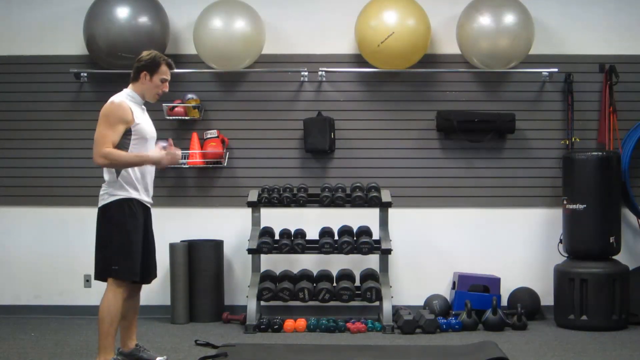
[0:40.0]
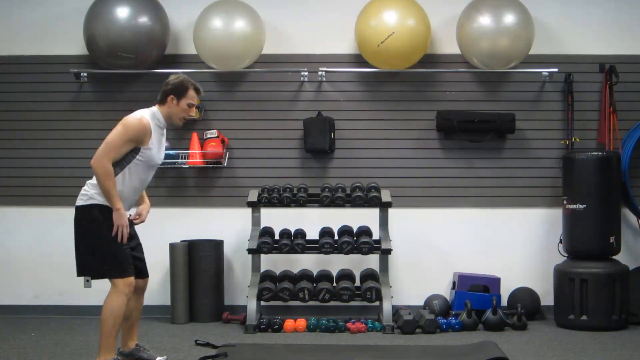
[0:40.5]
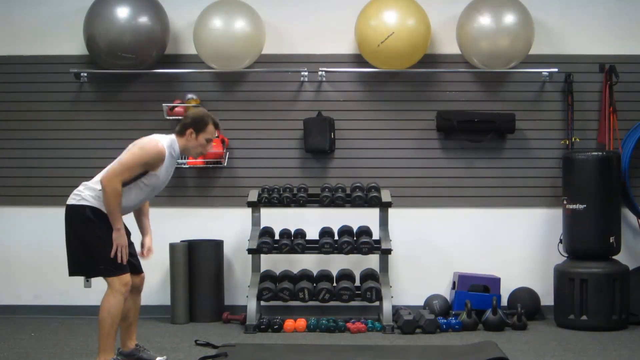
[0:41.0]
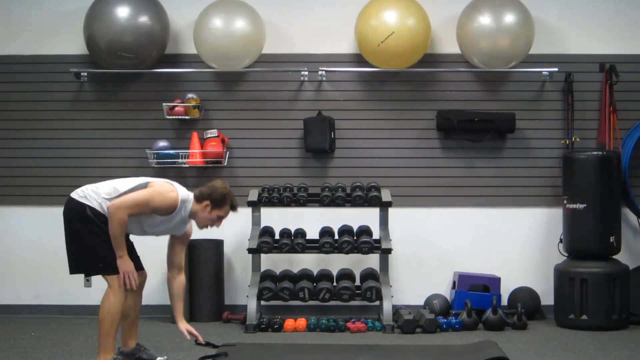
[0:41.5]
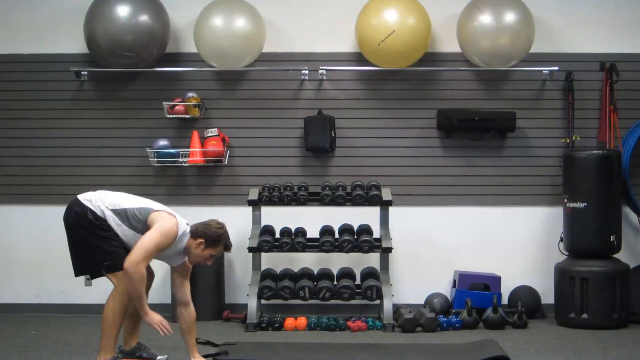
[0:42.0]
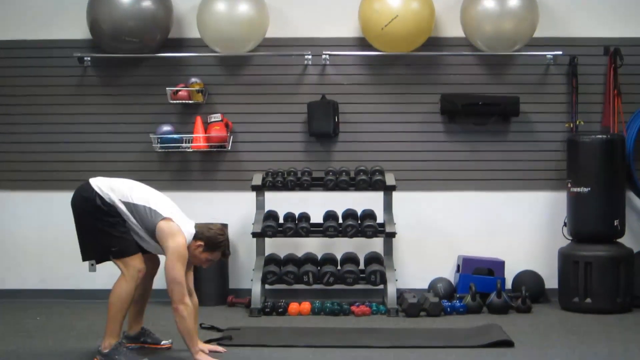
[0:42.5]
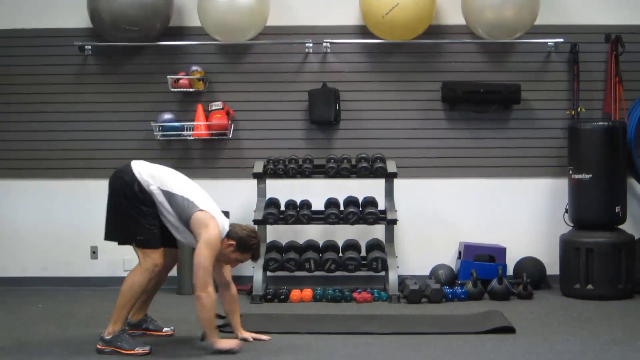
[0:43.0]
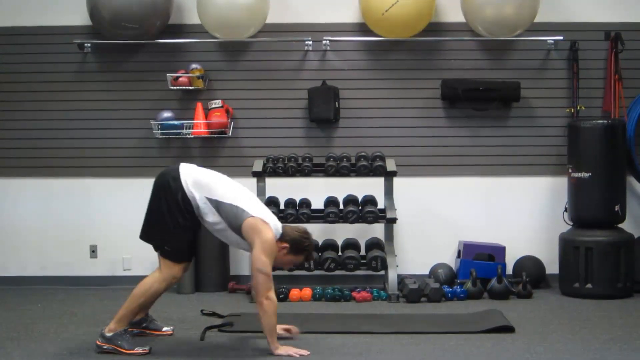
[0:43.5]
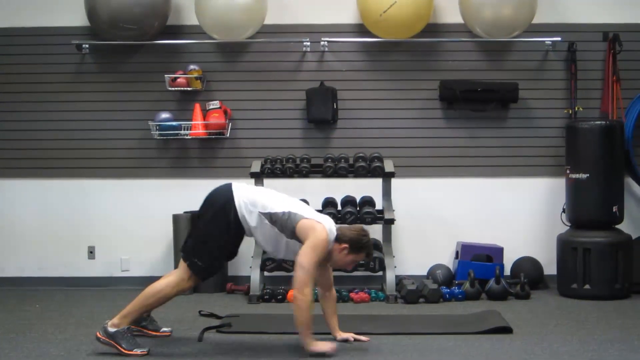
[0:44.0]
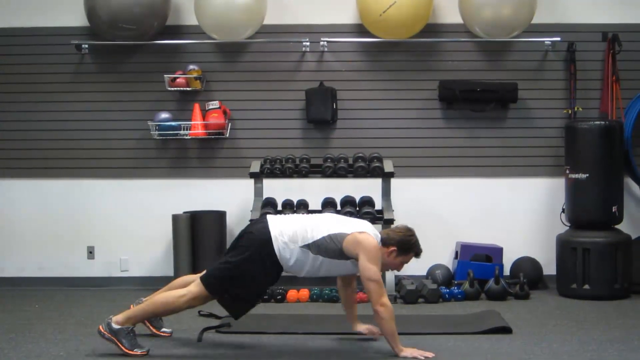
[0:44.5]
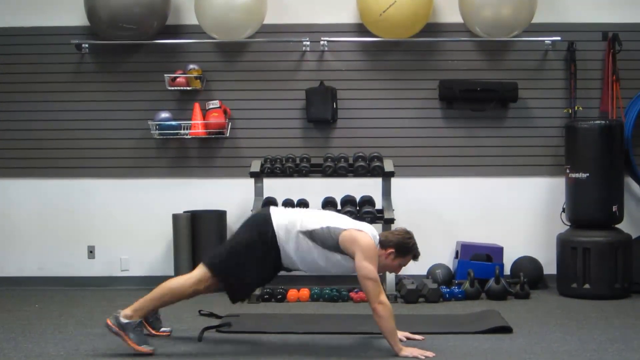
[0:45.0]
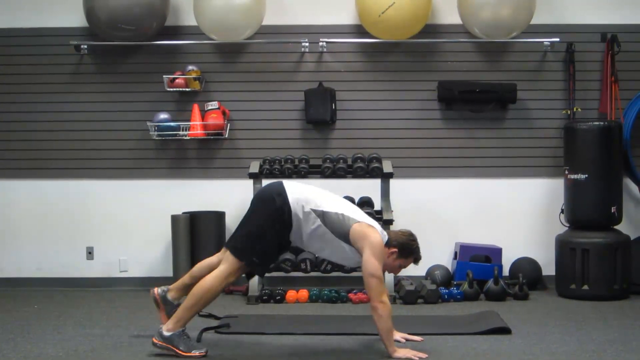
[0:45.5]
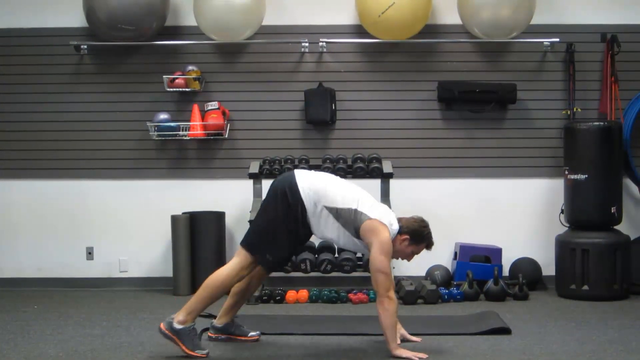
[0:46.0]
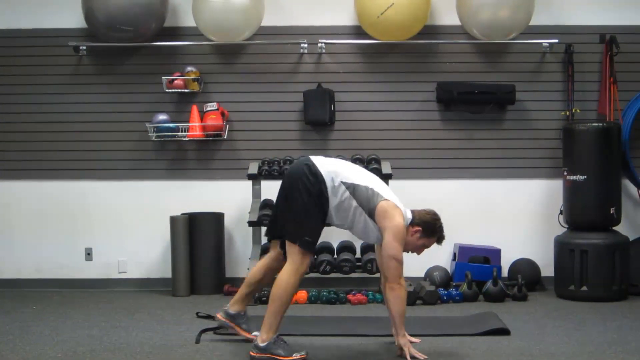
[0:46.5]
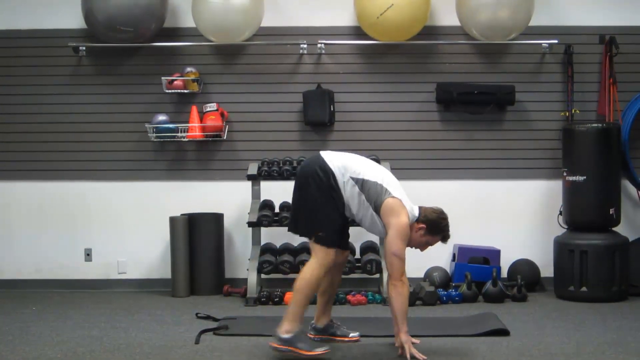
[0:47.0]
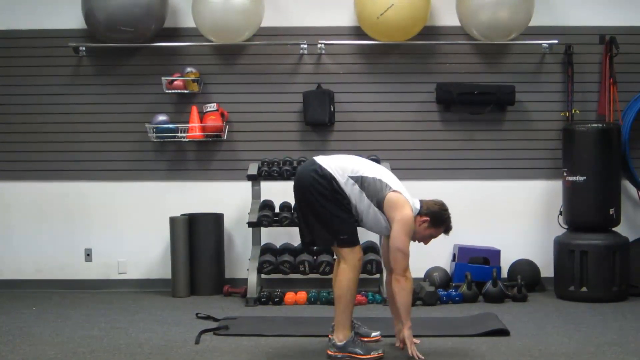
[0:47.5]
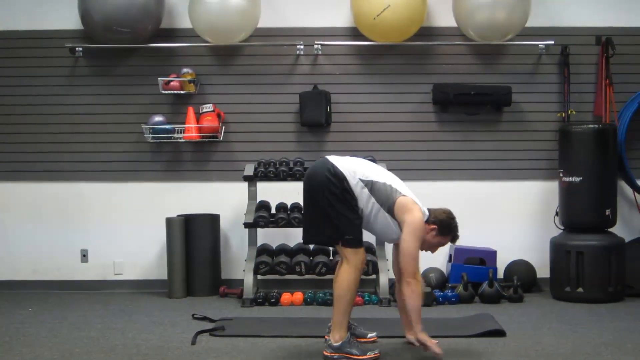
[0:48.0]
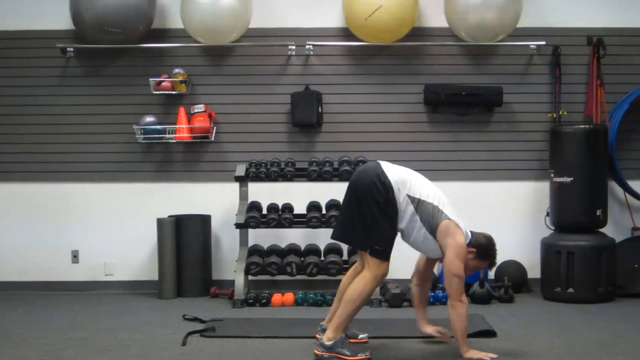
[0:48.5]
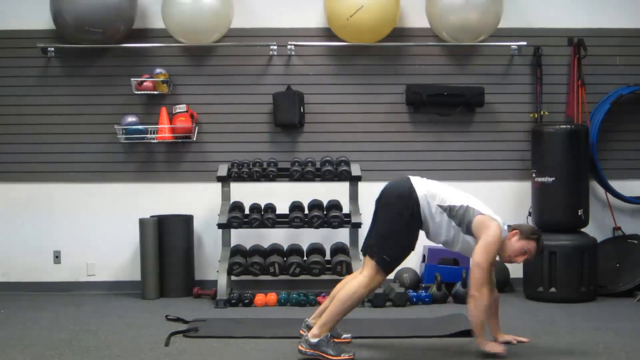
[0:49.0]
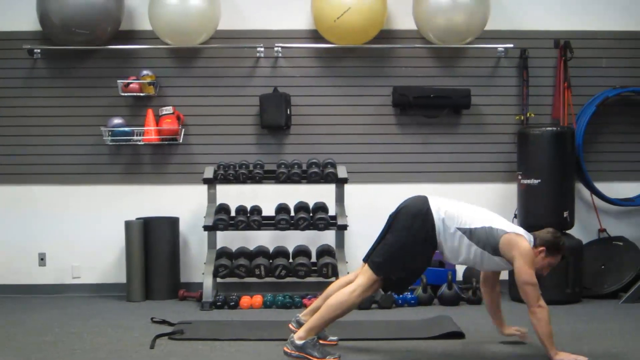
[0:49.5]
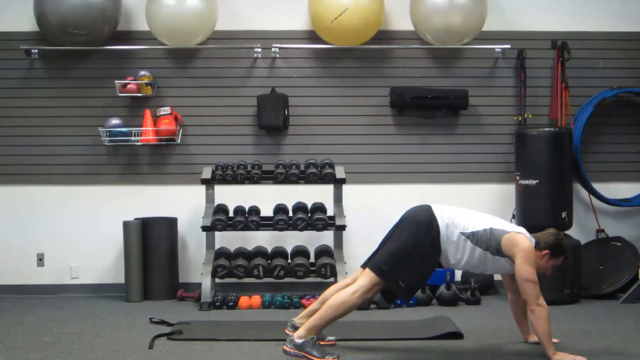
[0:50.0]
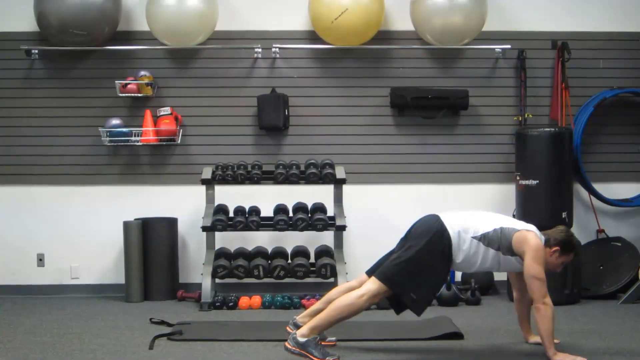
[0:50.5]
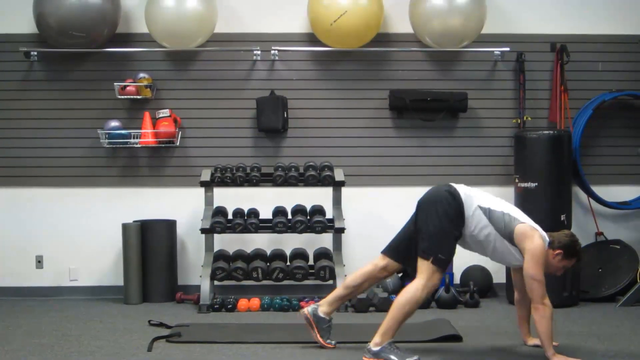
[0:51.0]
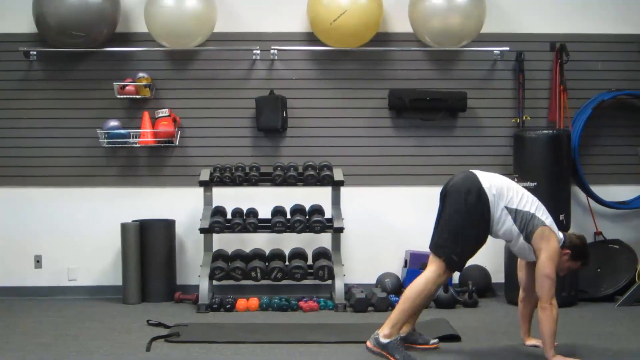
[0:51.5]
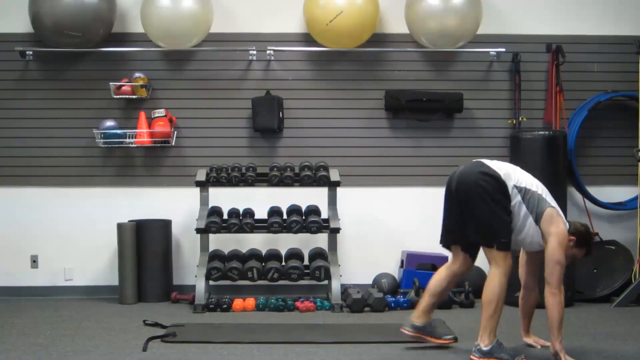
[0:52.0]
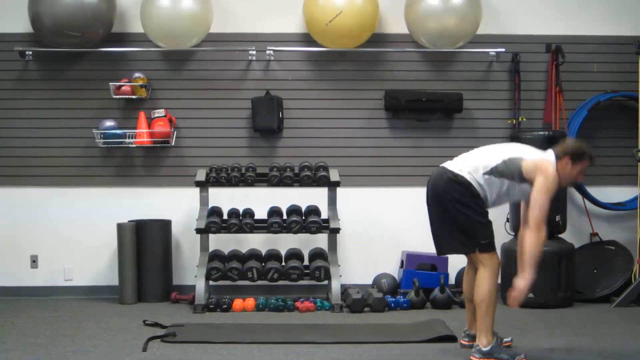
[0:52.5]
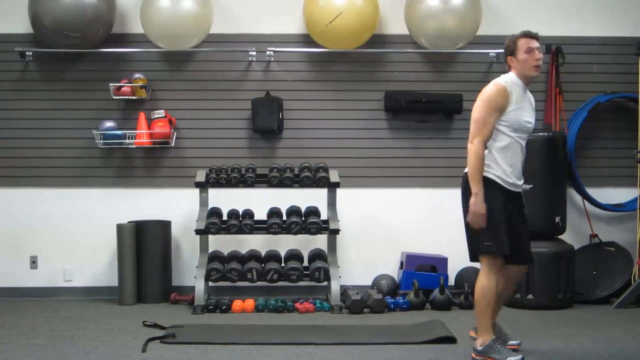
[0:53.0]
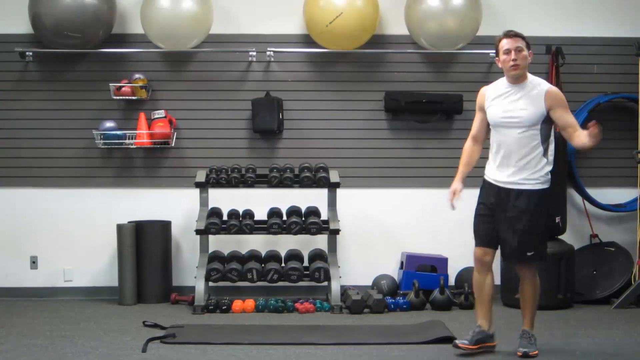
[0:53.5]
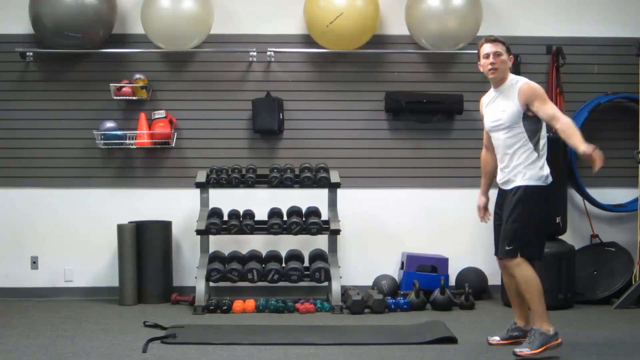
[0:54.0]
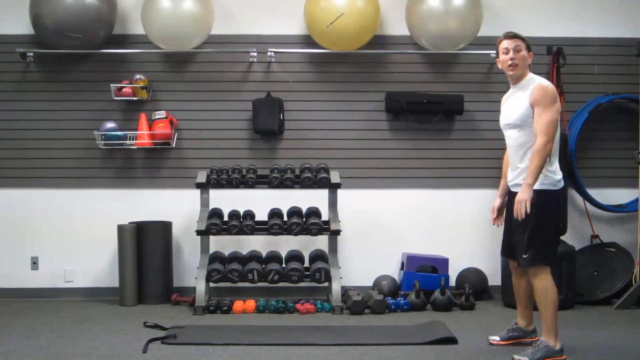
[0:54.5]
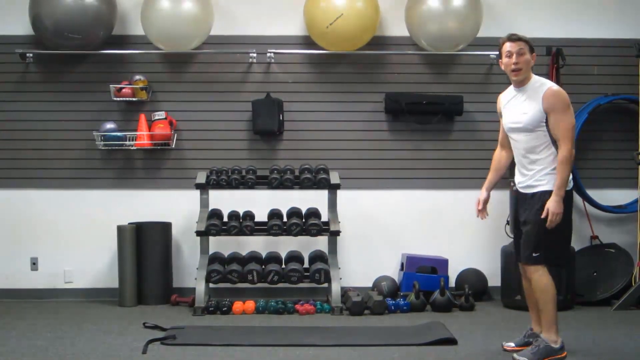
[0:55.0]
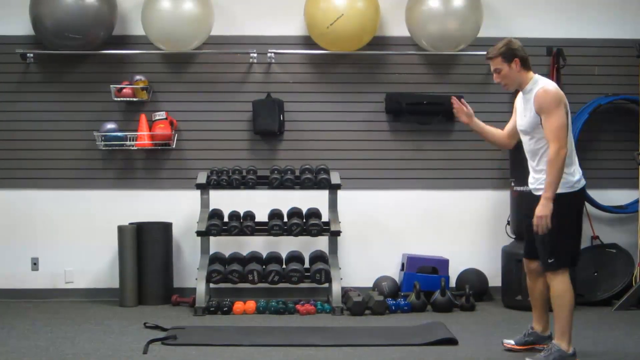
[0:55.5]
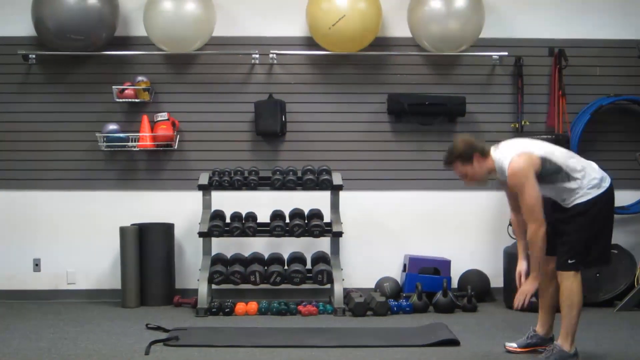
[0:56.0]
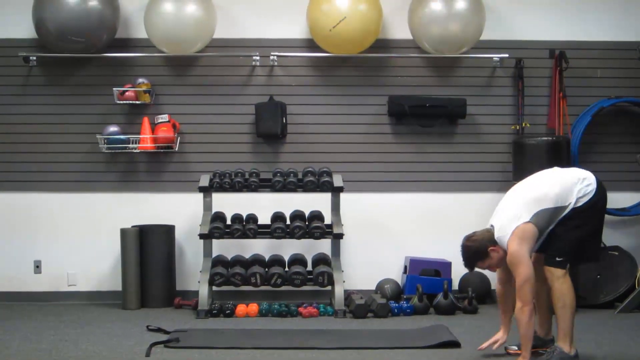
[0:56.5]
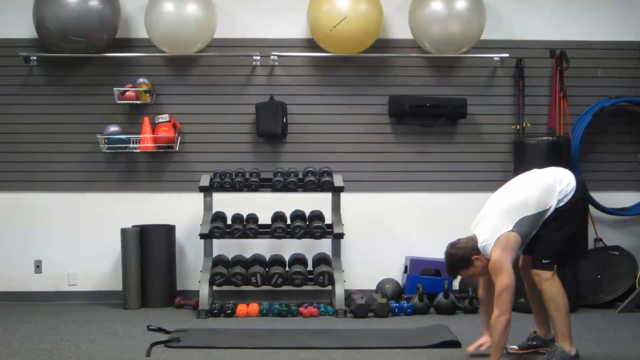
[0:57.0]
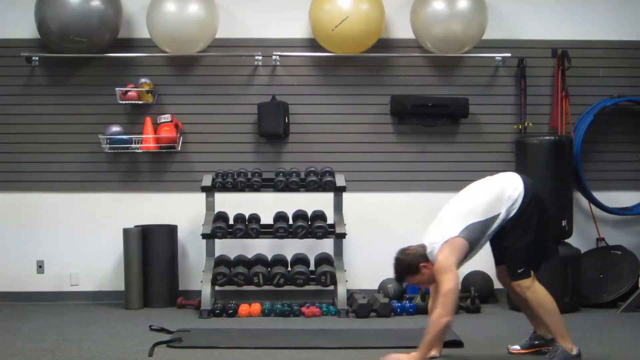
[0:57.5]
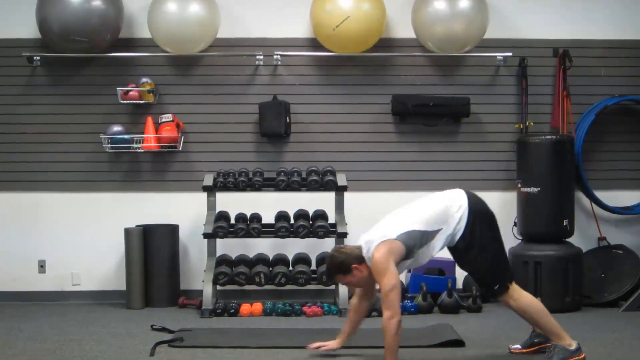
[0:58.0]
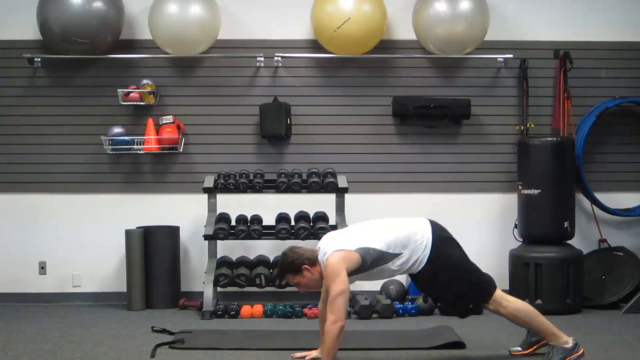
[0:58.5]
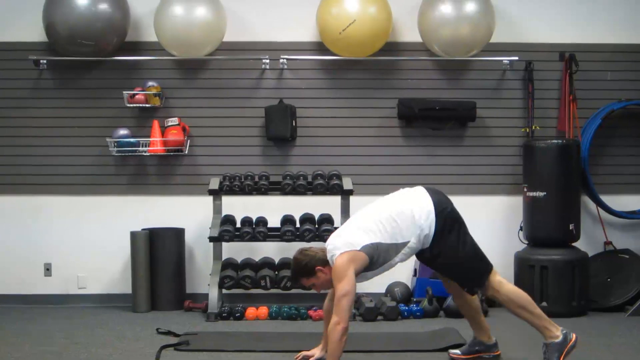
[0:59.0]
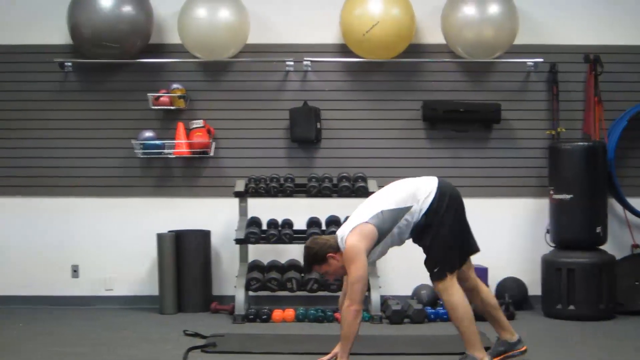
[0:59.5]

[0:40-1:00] The man in a white tank top gets into position to work out. He bends forward, looking as if he is going to pick up an item on the ground, positions himself in a crab-like manner and pushes his hands on the floor. With his body leaning down, he pushes forward into a push-up position, then moves his feet toward his hands, walking back and forth. He seems to push his arms up and follow along with his feet, apparently demonstrating a crab walk. He then turns his body around 180 degrees, points toward the camera with his left hand, begins to talk, and does the exact same thing on the opposite side, walking with his hands bent forward and his legs bent back.